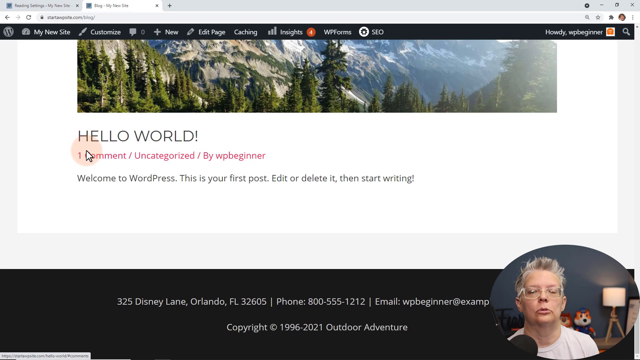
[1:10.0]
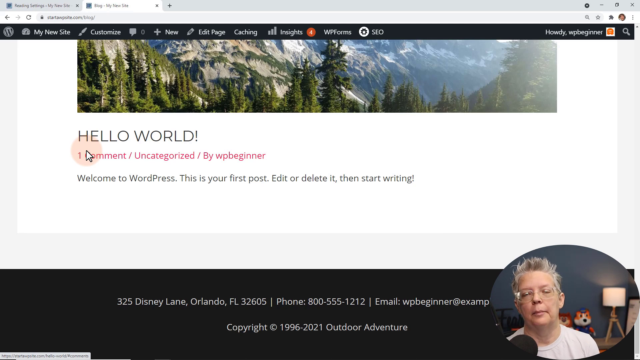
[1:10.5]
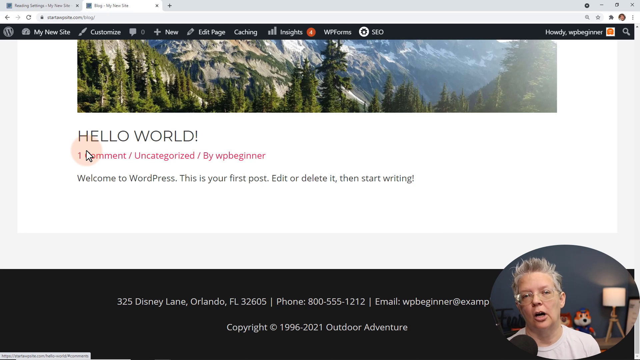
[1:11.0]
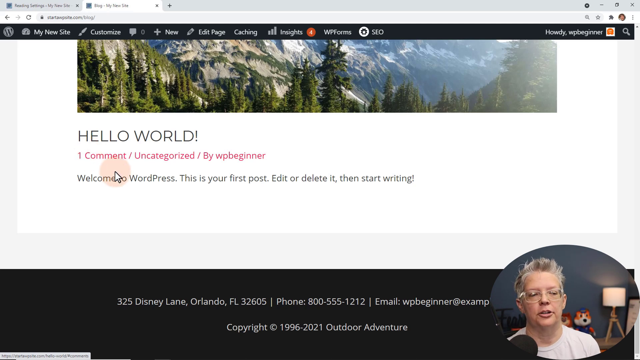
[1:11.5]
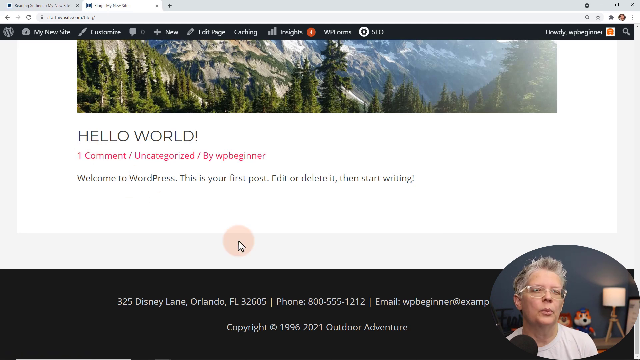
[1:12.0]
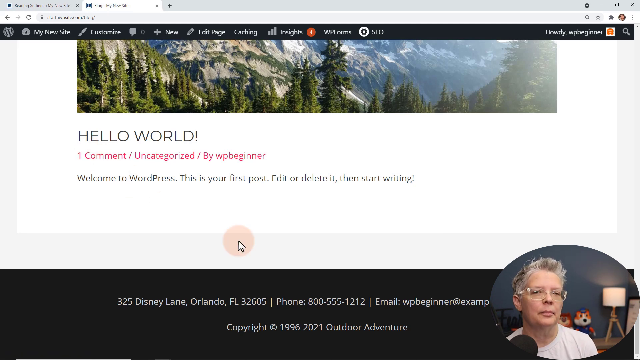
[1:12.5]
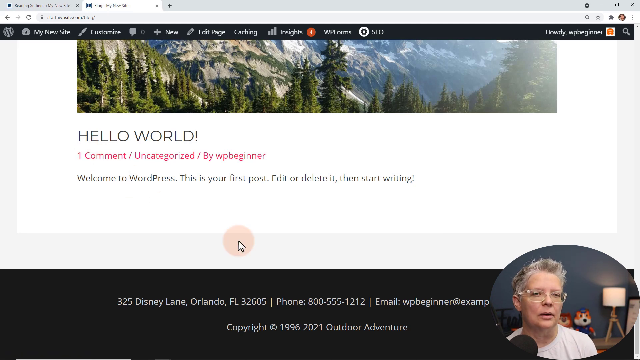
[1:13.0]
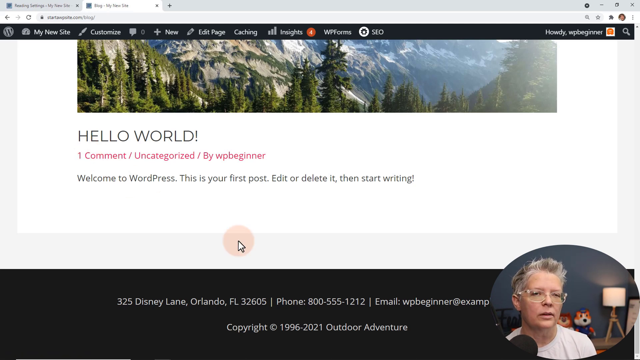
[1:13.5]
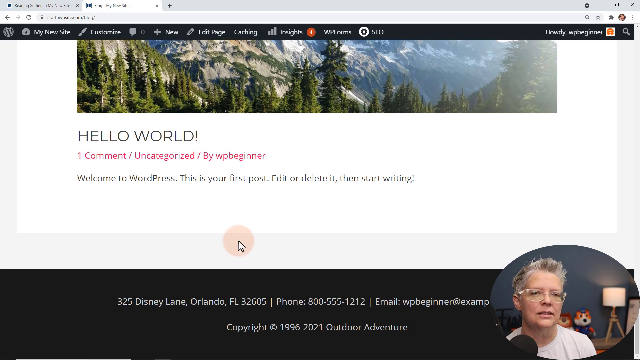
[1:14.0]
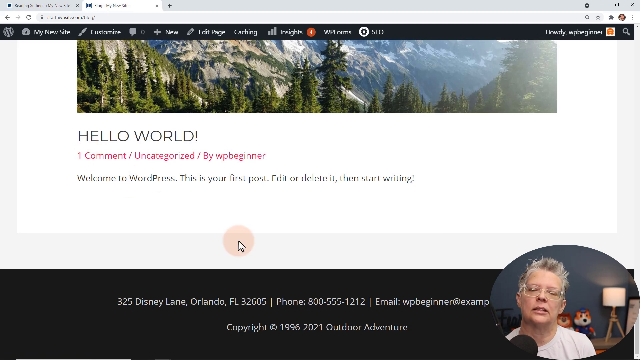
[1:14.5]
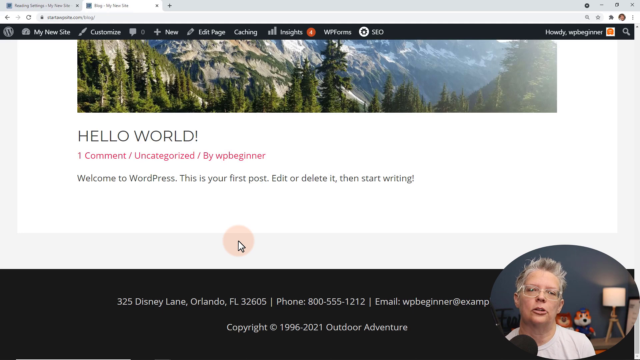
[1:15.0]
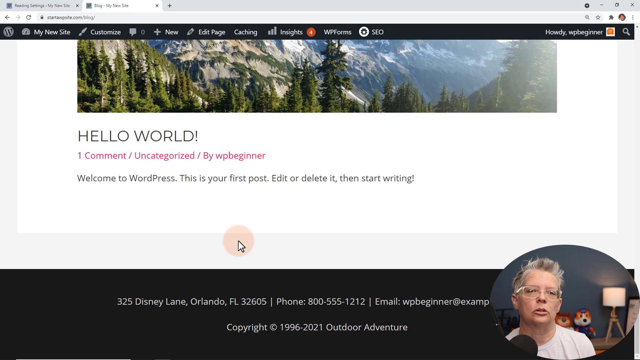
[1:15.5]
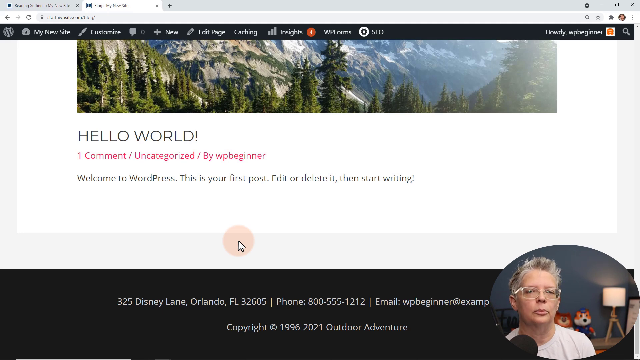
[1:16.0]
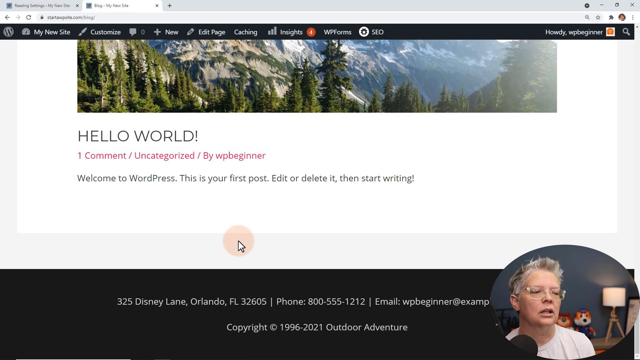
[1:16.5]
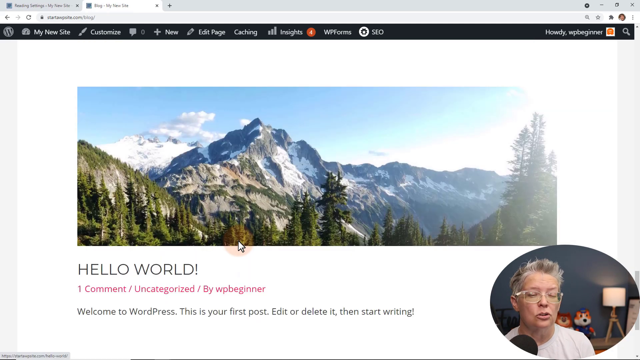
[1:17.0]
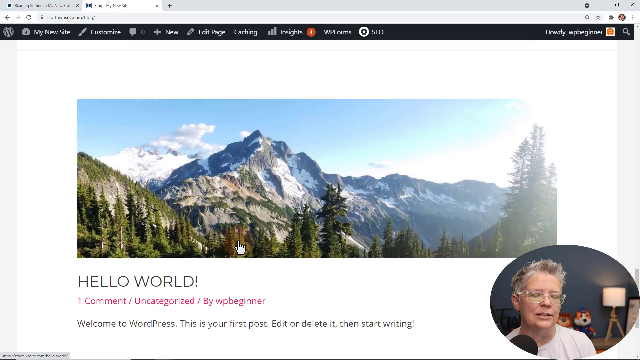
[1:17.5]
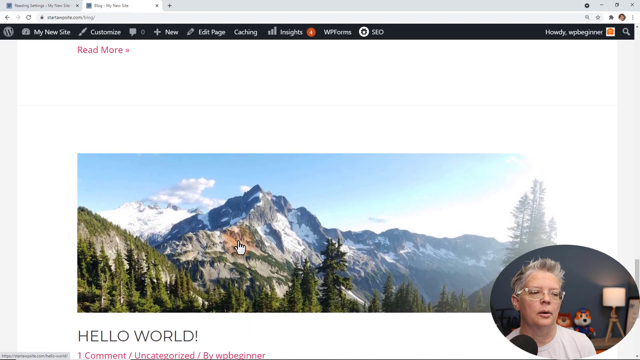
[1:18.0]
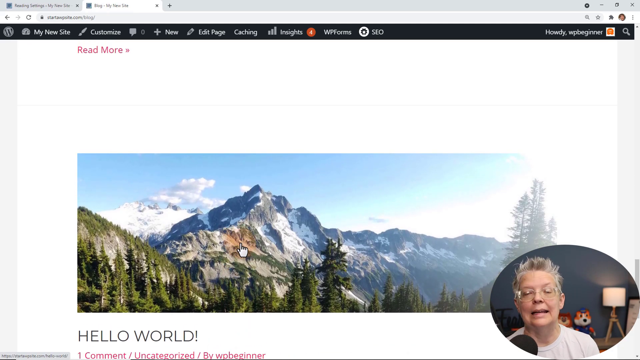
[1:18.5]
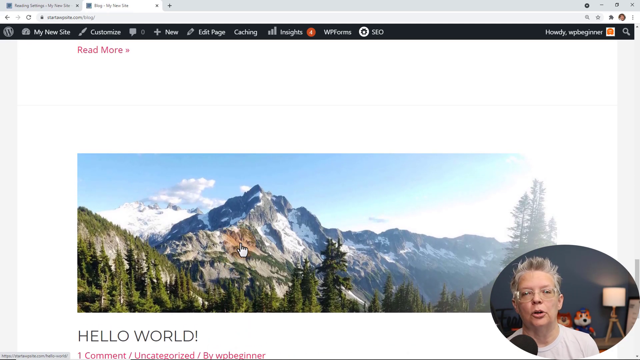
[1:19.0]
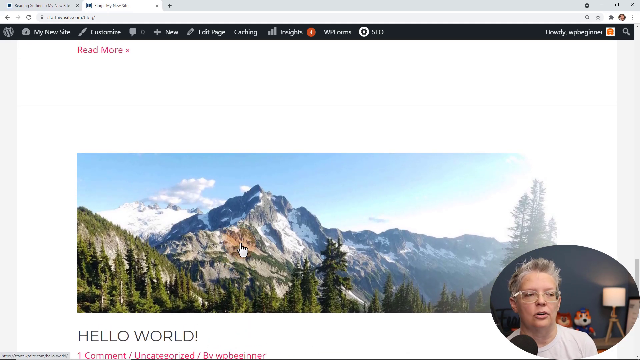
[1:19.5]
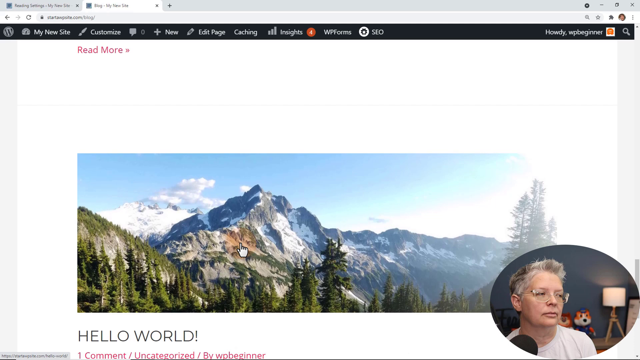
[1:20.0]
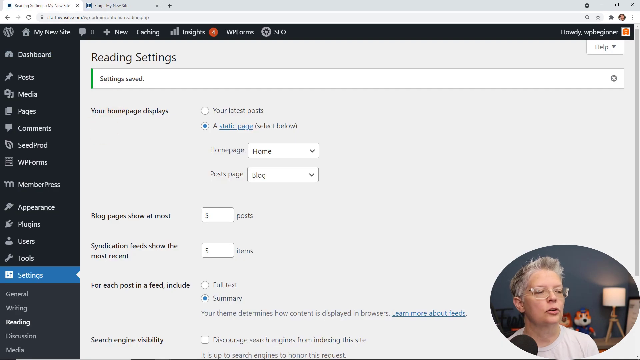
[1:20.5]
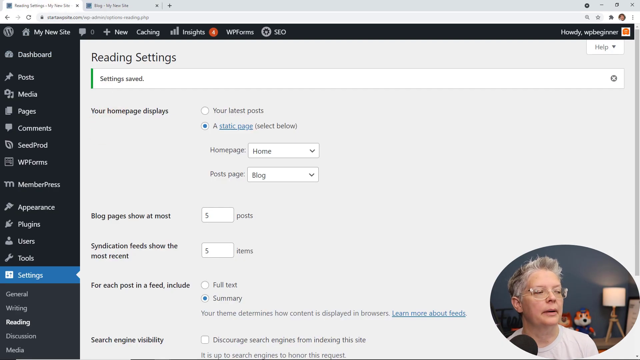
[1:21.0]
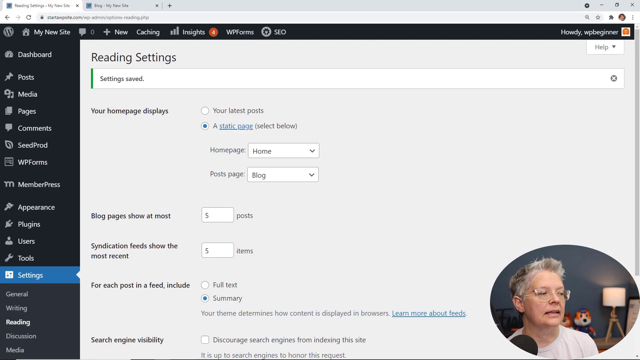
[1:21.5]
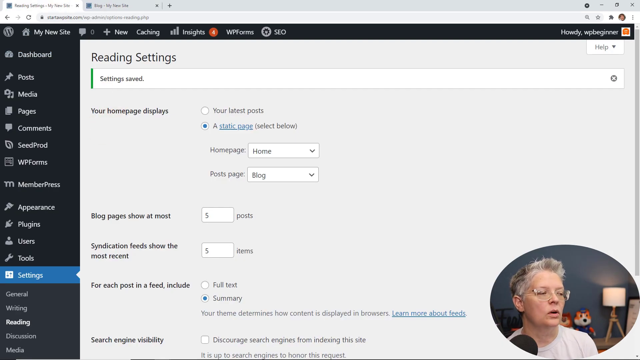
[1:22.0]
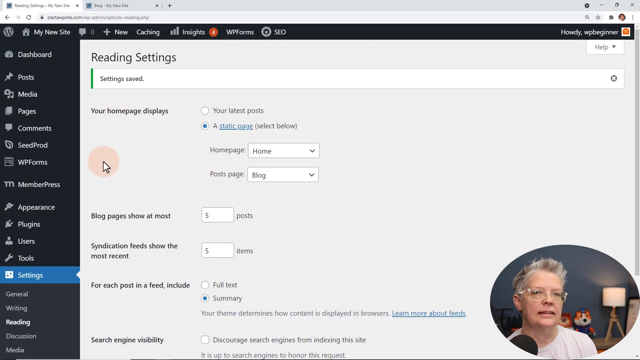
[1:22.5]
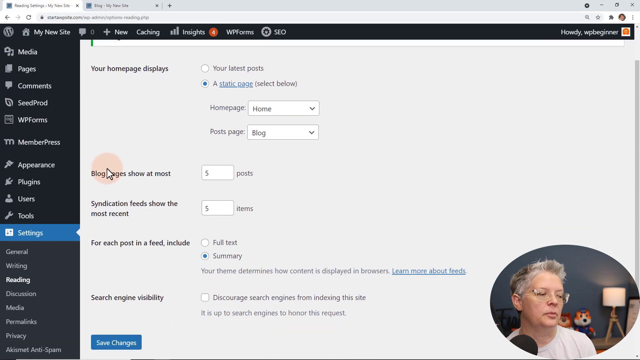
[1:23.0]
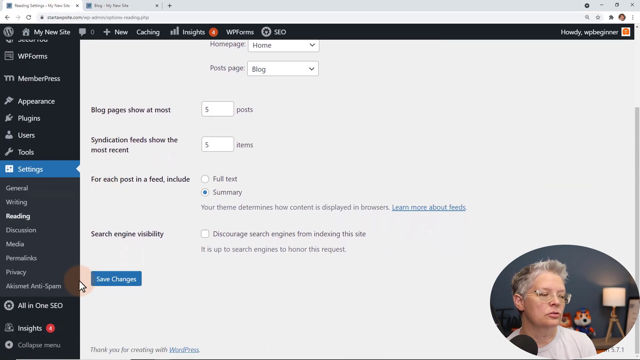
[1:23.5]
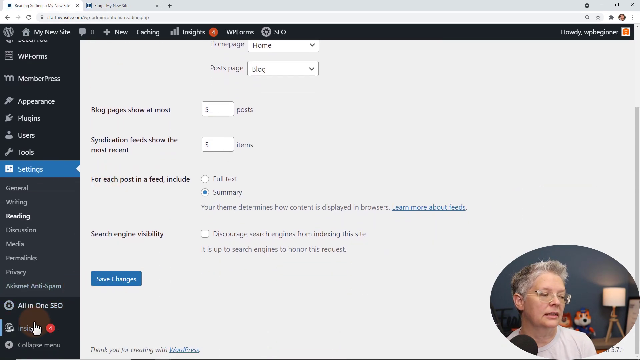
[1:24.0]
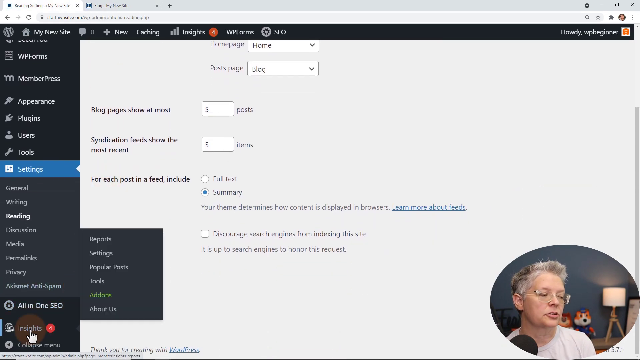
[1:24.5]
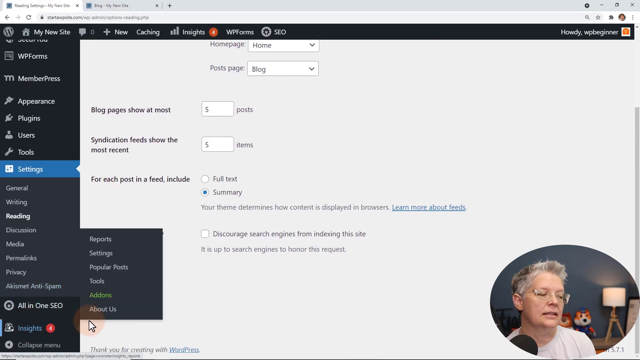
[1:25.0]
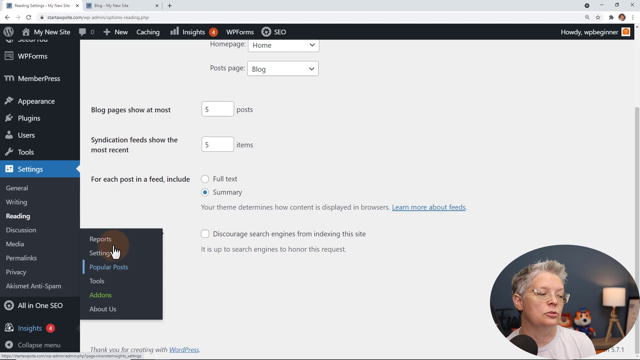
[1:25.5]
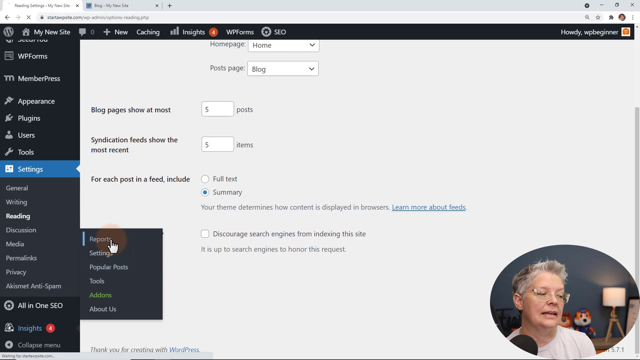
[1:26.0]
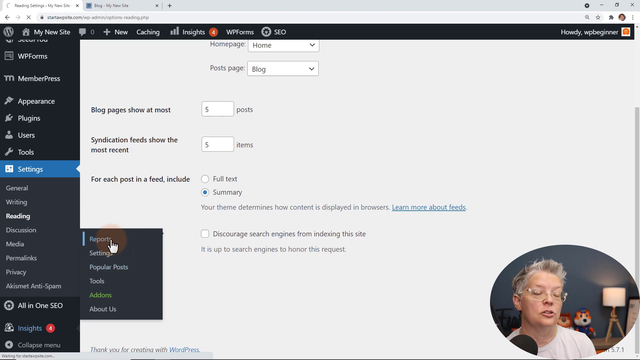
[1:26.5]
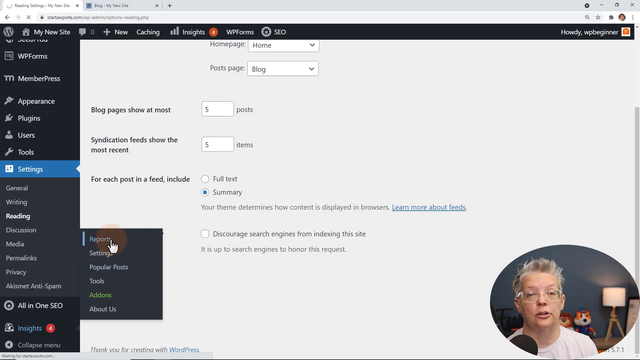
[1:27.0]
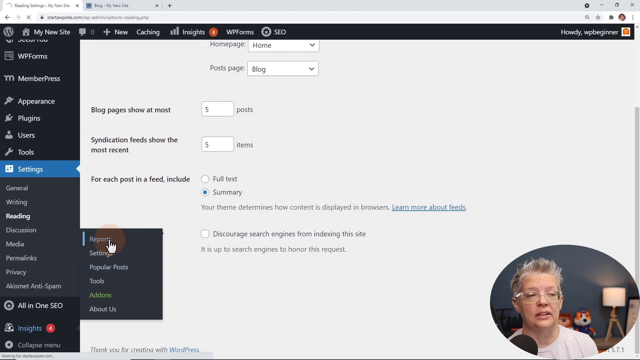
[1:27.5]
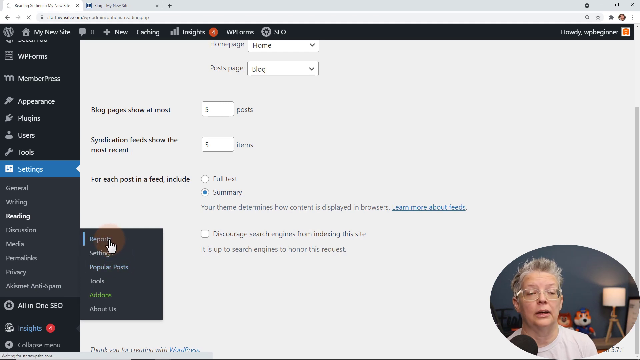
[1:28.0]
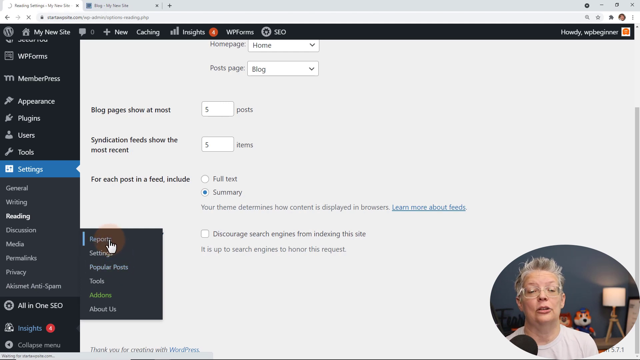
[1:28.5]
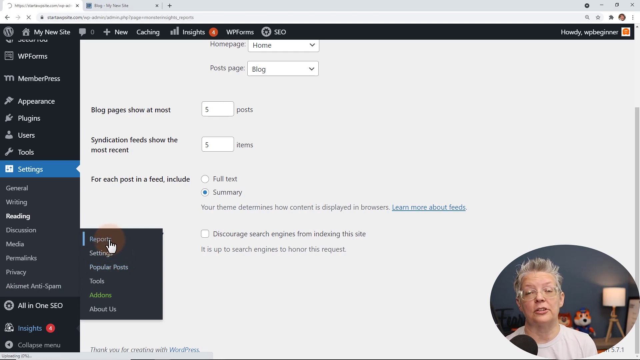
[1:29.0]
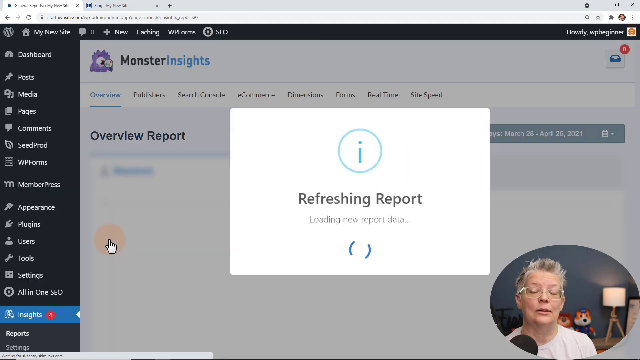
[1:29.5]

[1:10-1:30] The woman continues to navigate the page; she has gray hair, glasses and a white shirt, there is a microphone, and behind her are a blue-looking wall and a lamp with light shining from it. The page has a footer with information about Disneyland Orlando, Florida, along with a phone number and an email. At the bottom of the page there is also information about a comment section and Warner Bros. Going back to the other page, she selects a setting in the bottom left and clicks the reports area, navigating to a reports page. Her face remains visible in the bubble in the bottom right-hand corner of the video as it moves from page to page.